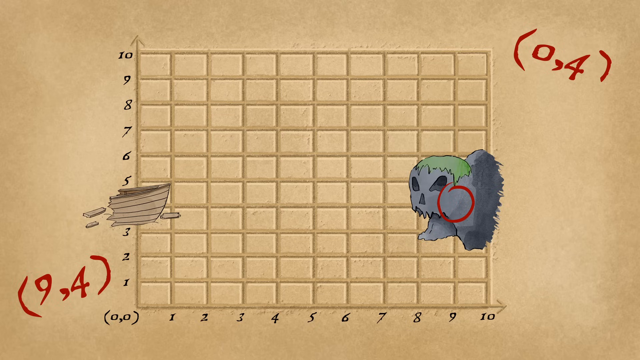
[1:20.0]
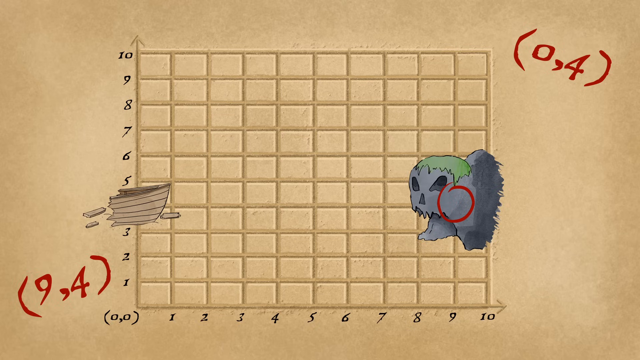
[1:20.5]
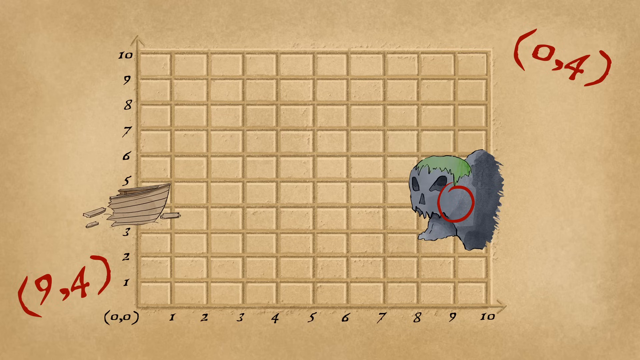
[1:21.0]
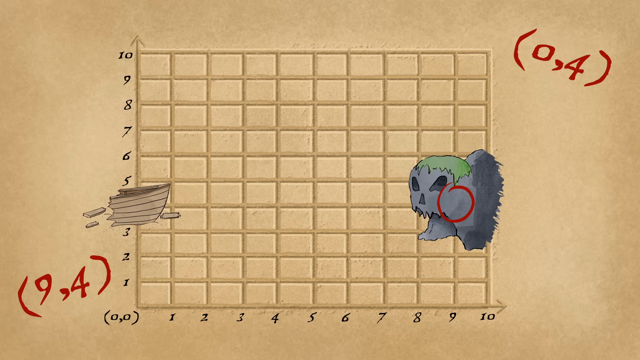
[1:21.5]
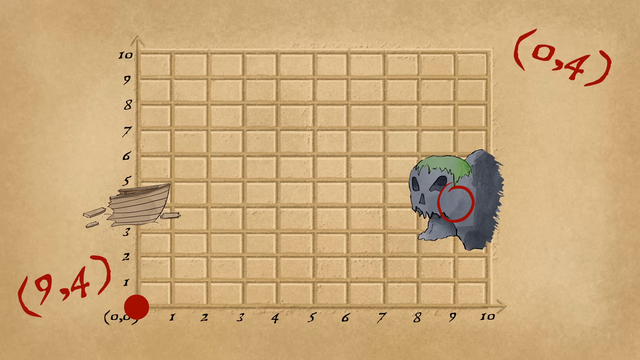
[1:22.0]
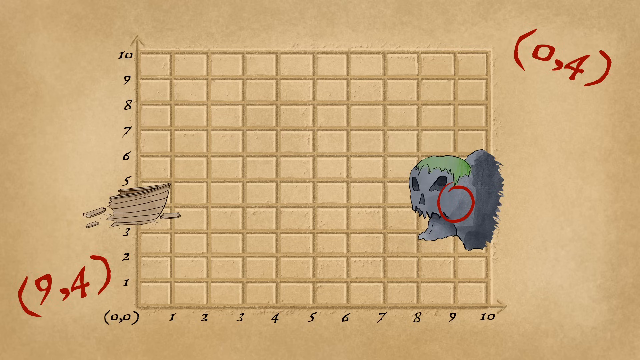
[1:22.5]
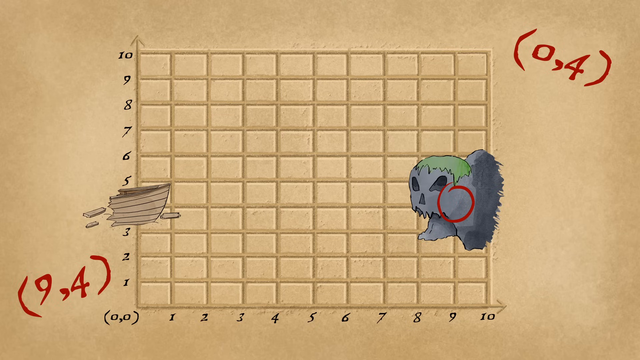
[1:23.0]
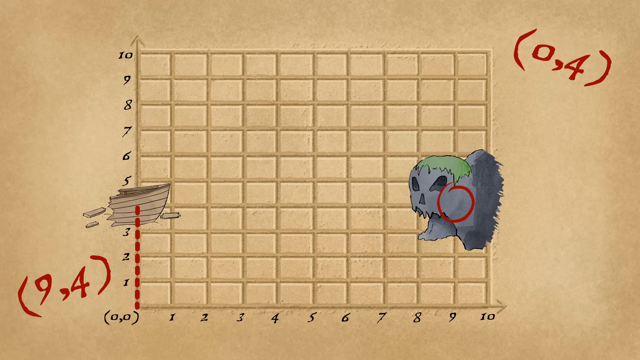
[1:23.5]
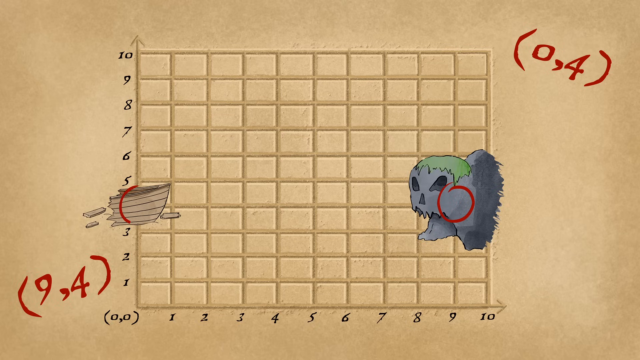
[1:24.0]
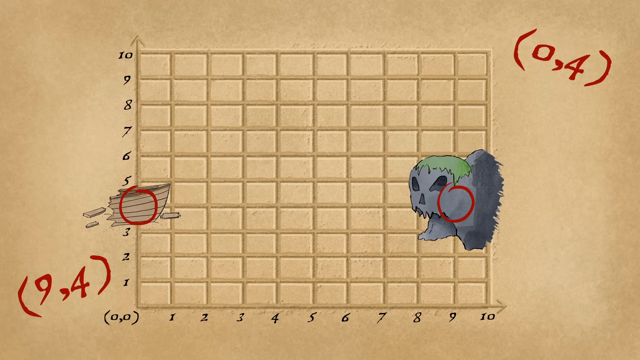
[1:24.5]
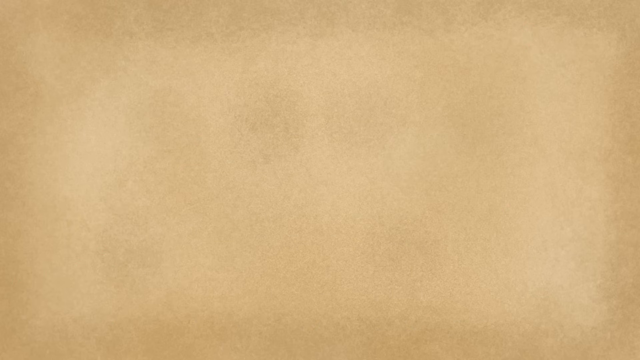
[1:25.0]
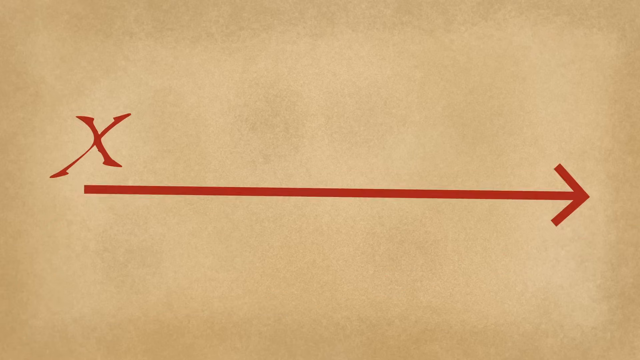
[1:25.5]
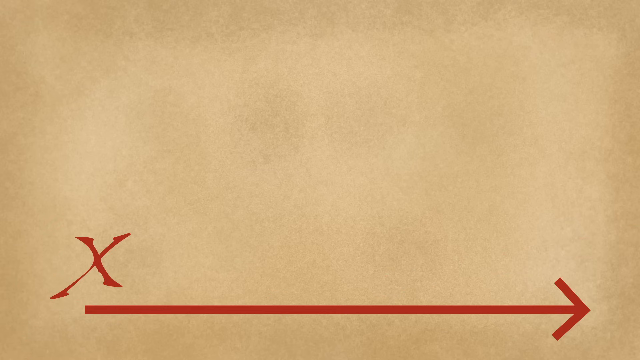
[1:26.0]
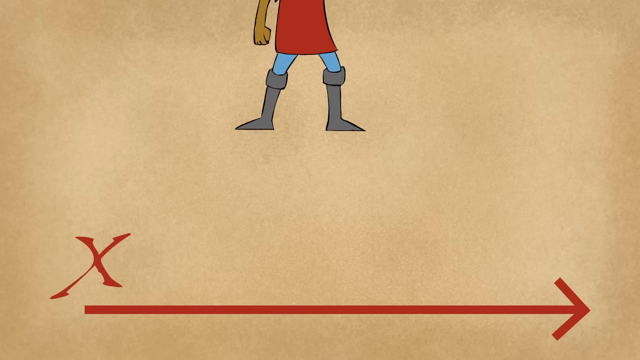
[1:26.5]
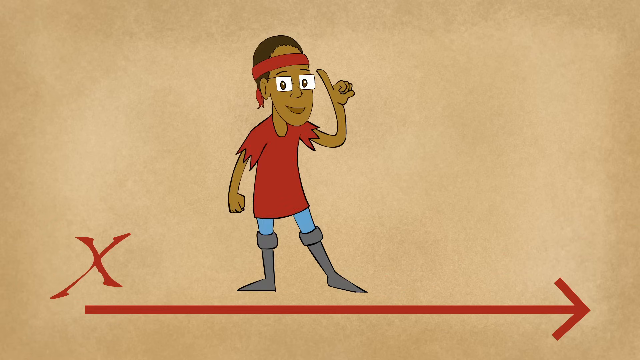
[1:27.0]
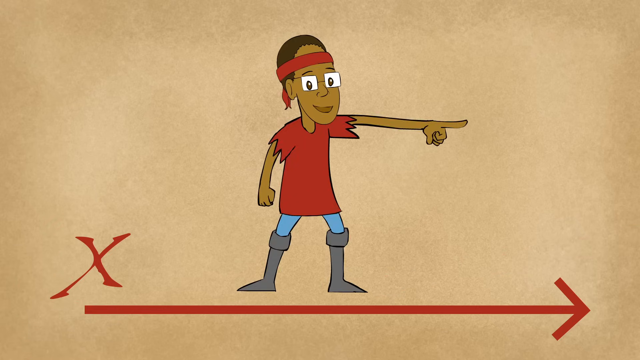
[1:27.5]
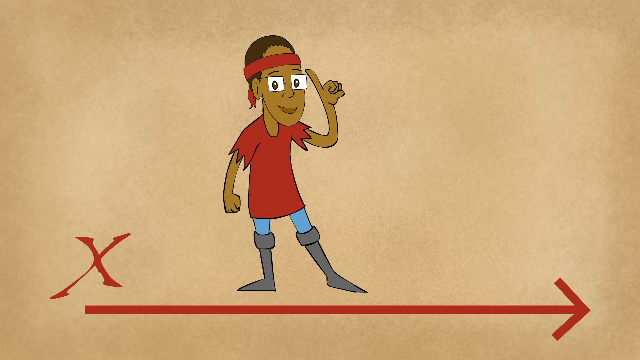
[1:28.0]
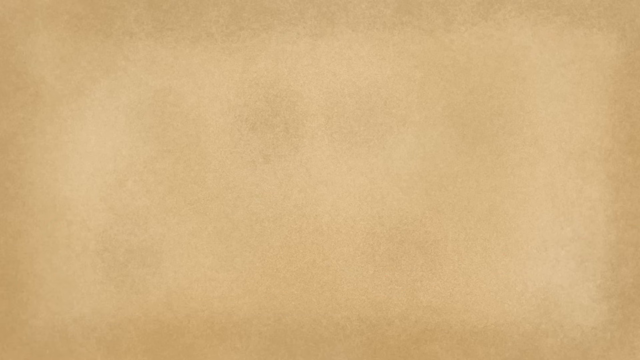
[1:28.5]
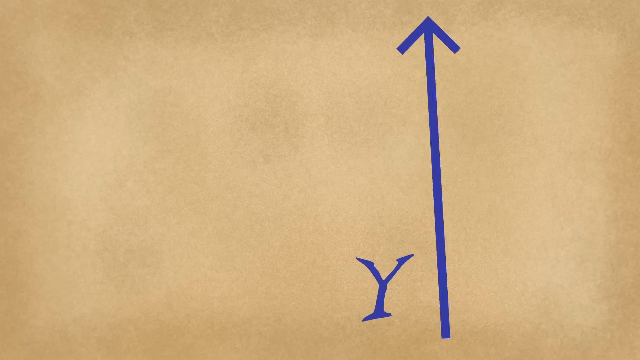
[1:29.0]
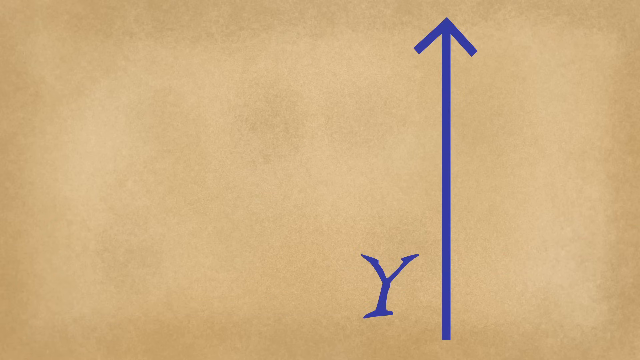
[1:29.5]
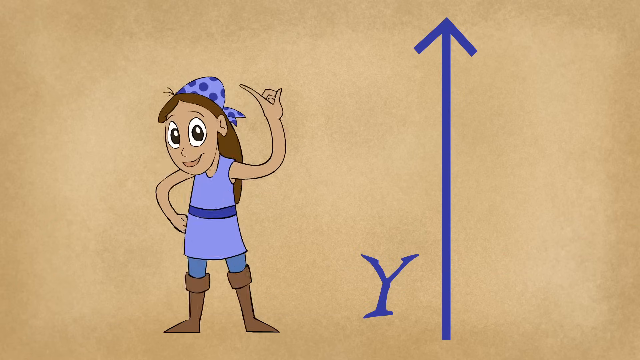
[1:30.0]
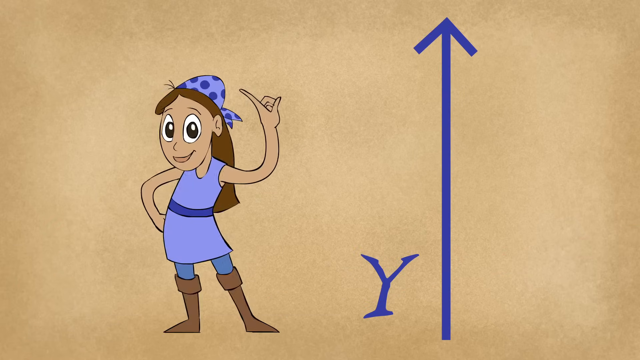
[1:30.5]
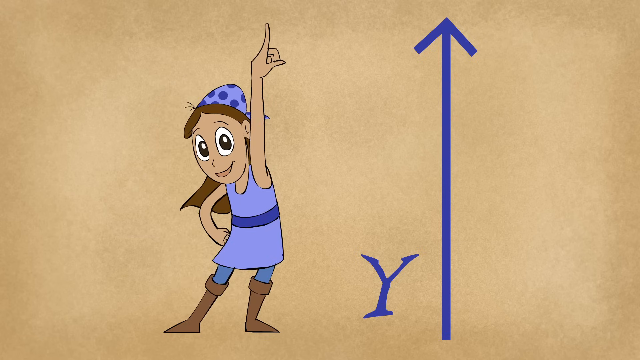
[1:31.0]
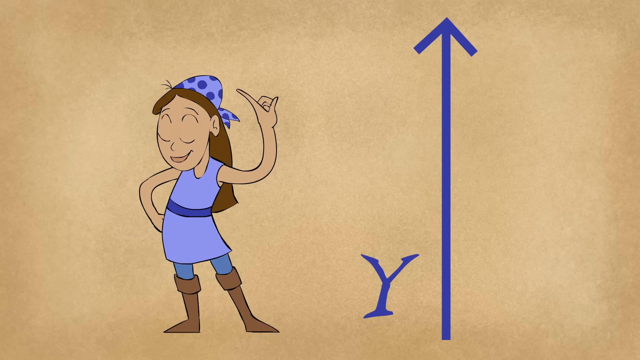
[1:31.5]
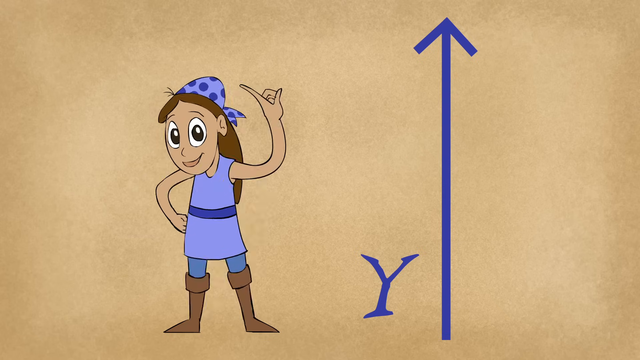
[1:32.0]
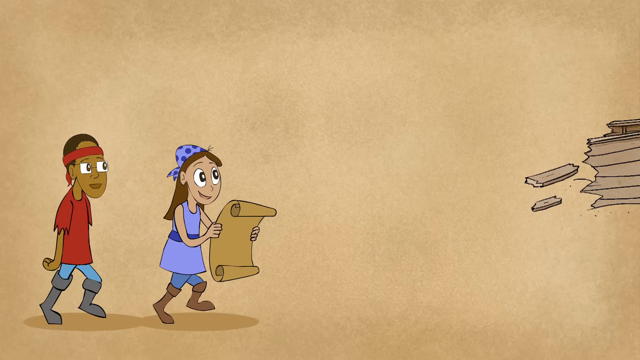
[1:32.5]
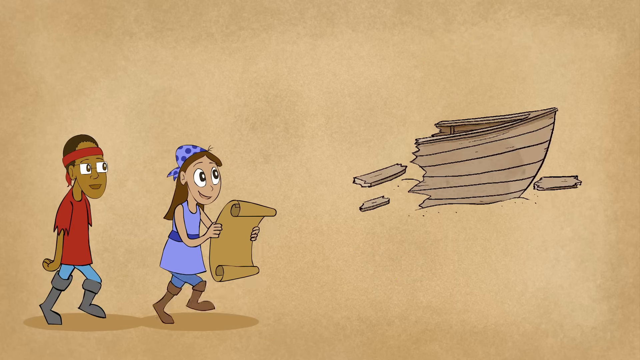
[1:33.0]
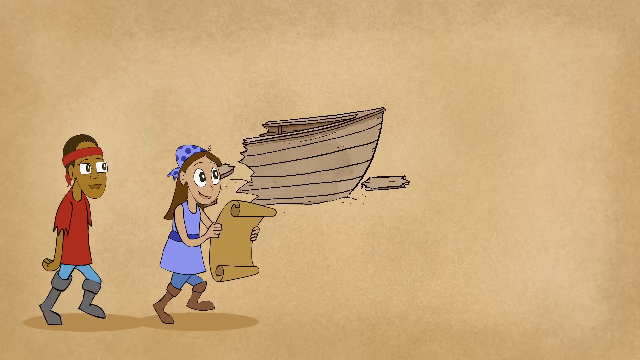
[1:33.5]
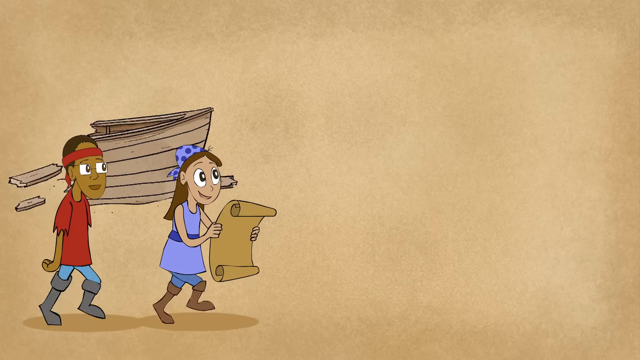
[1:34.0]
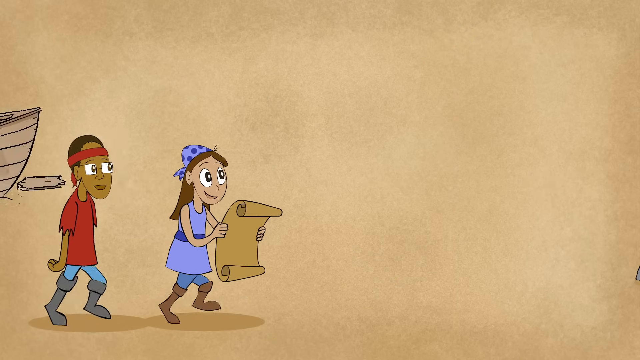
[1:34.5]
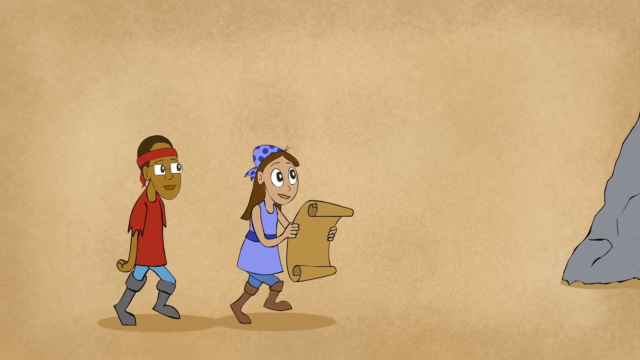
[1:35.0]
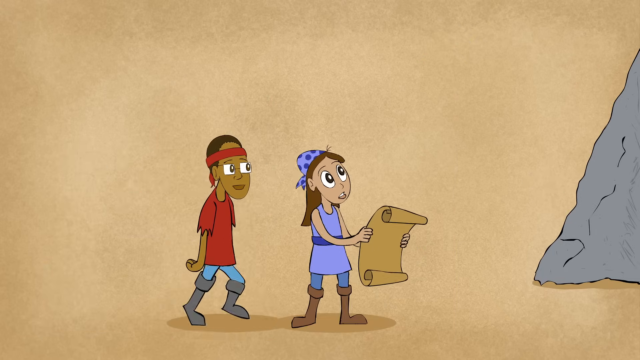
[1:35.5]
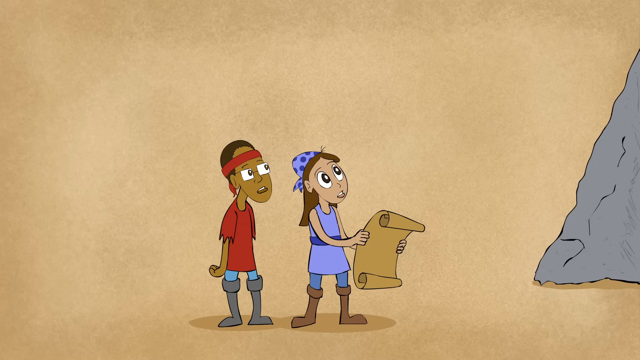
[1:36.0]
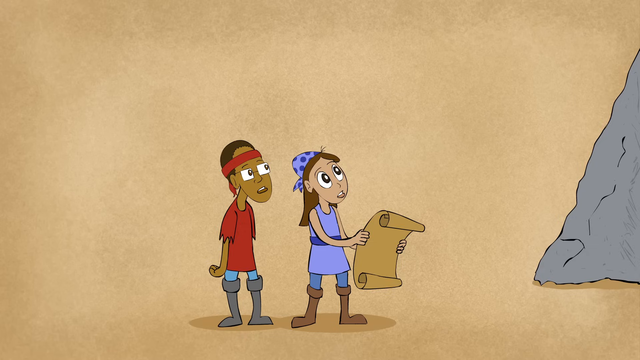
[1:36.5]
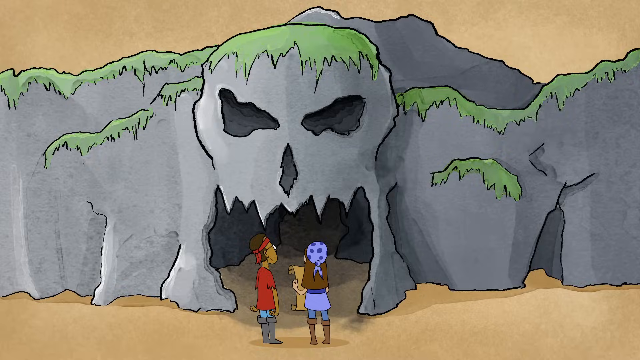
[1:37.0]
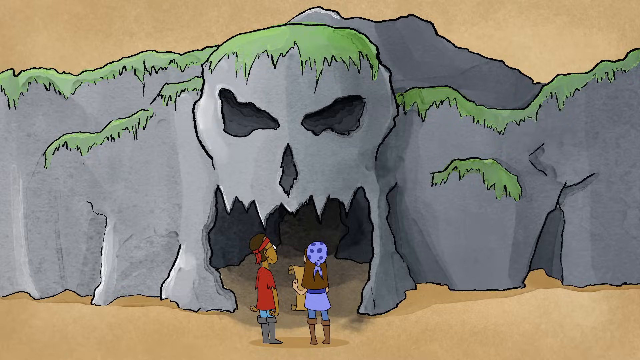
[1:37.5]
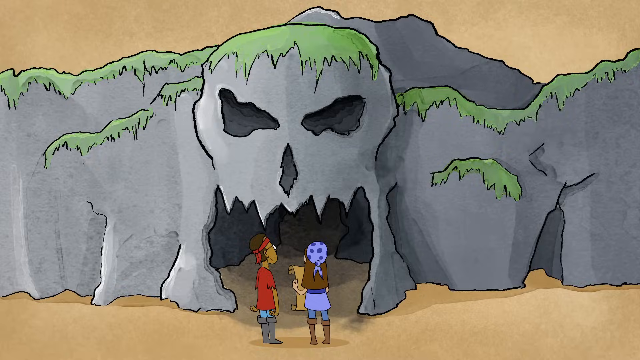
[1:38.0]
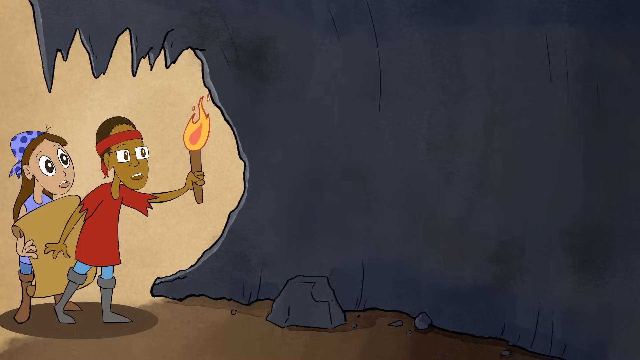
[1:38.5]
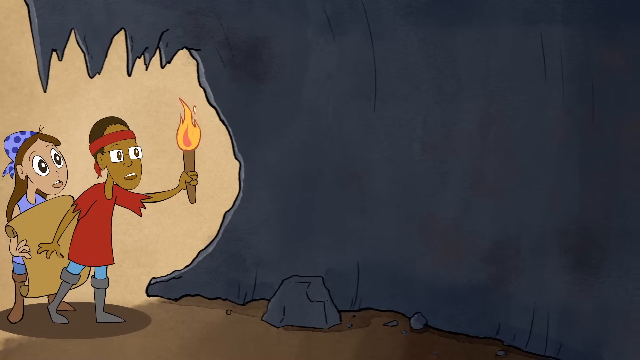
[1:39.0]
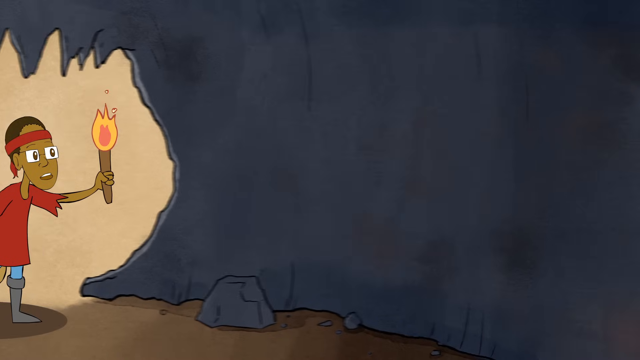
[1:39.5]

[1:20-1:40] The boy points to the lower destination and the girl points to the upper destination; X indicates the lower part and Y the upper part. The boy and the girl then search for something and reach a gap that looks scary. Together they try to understand the place and look at it.